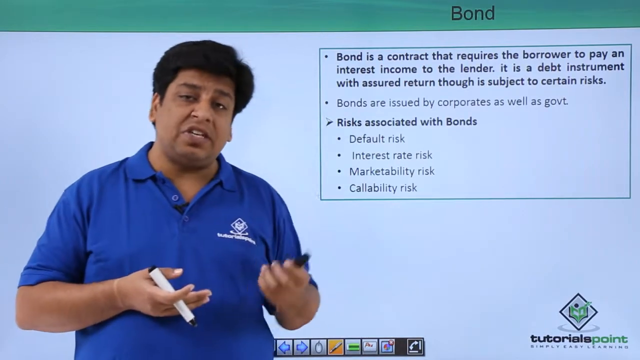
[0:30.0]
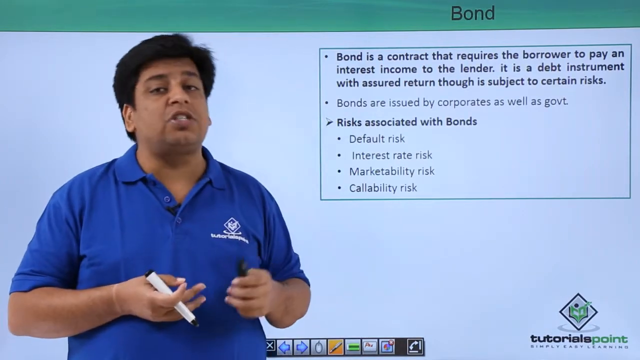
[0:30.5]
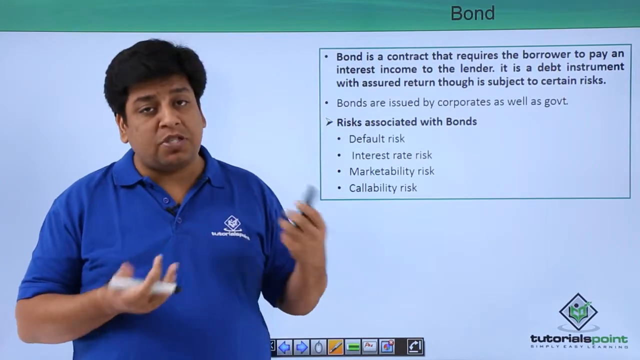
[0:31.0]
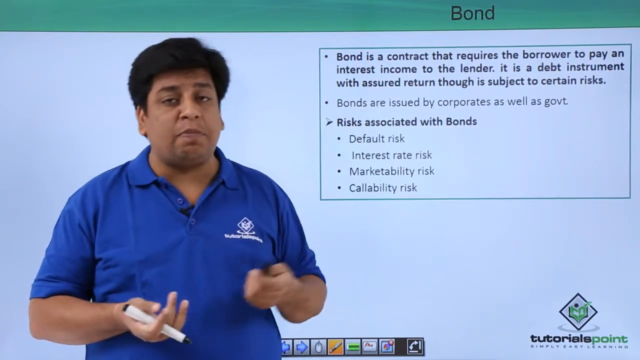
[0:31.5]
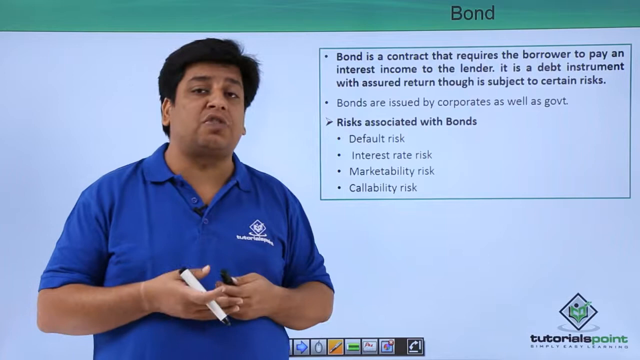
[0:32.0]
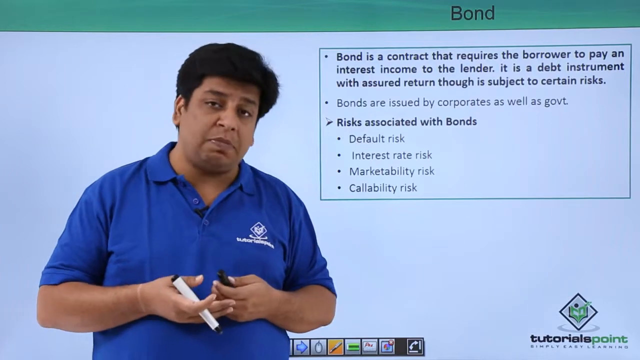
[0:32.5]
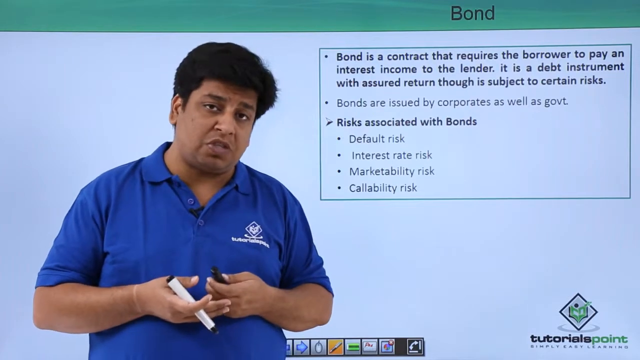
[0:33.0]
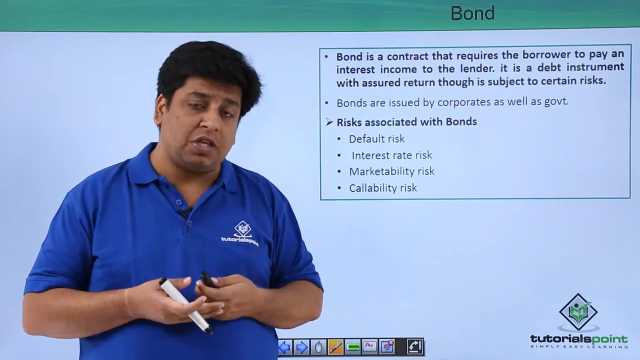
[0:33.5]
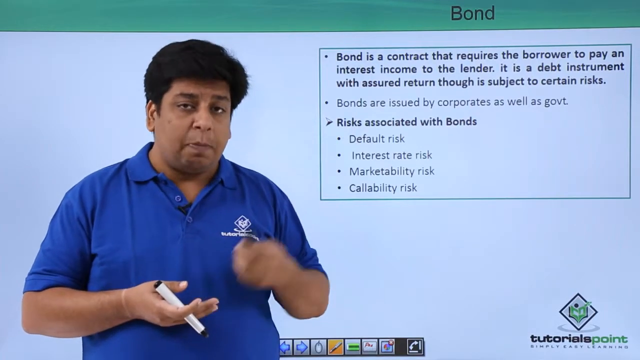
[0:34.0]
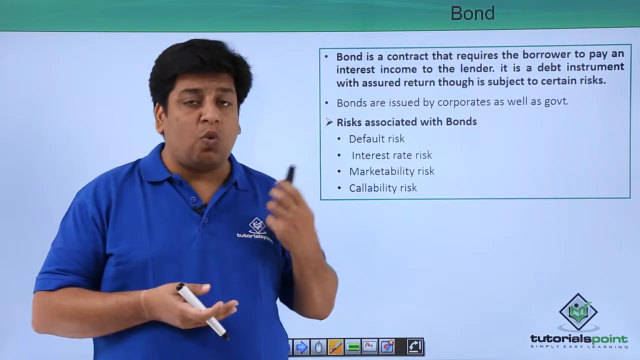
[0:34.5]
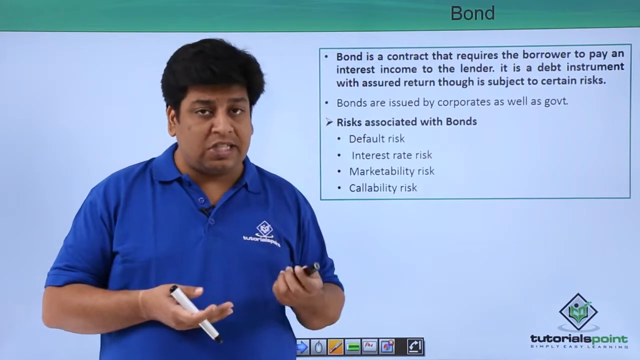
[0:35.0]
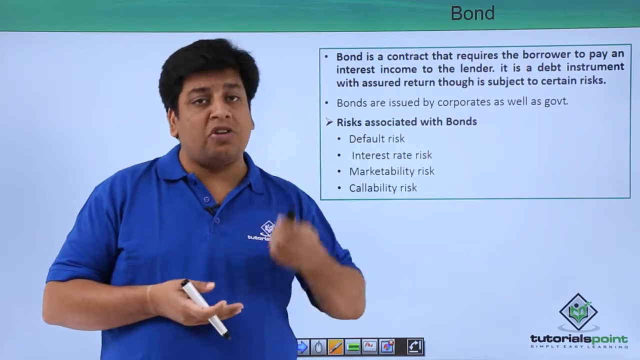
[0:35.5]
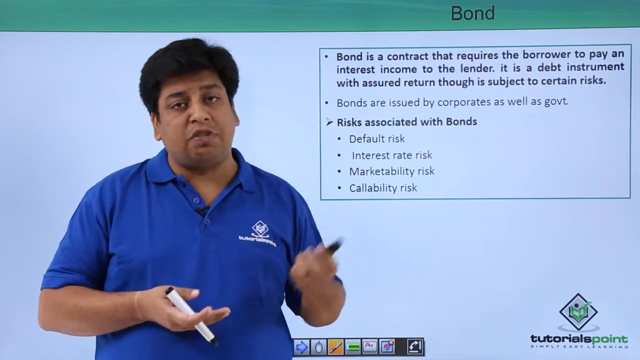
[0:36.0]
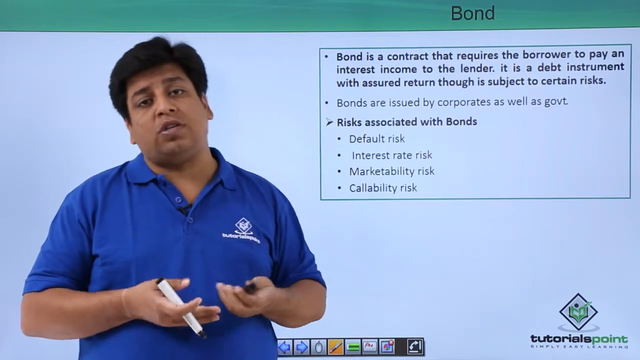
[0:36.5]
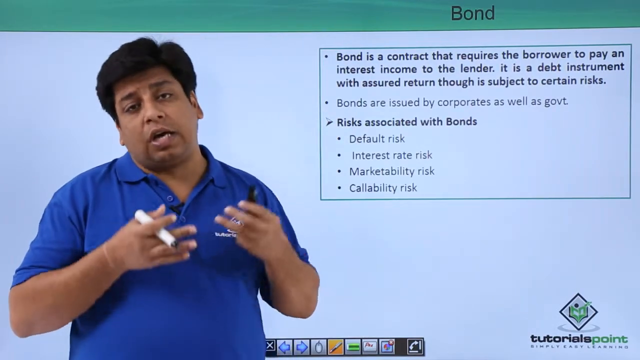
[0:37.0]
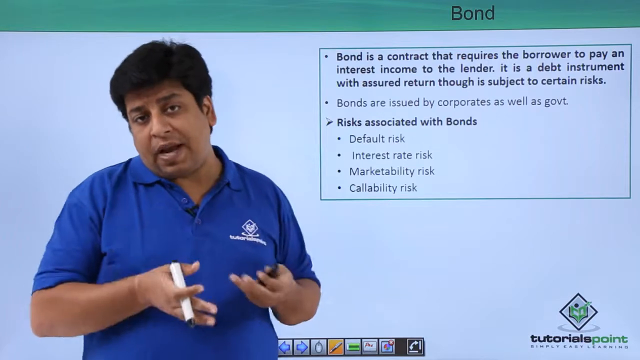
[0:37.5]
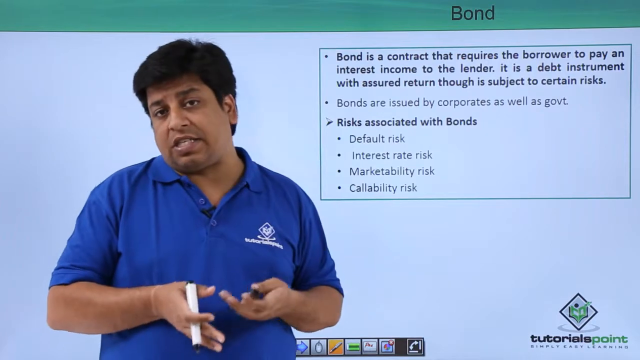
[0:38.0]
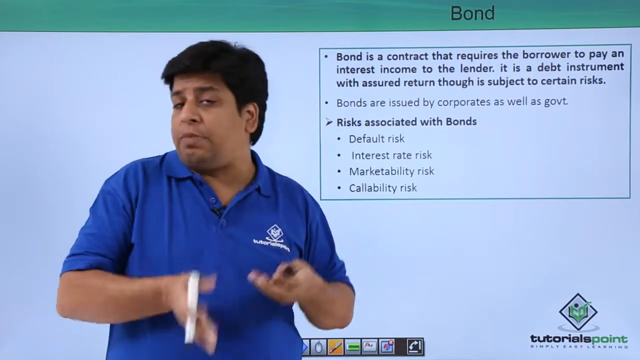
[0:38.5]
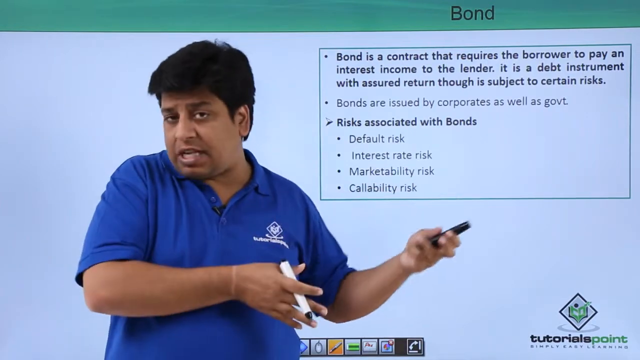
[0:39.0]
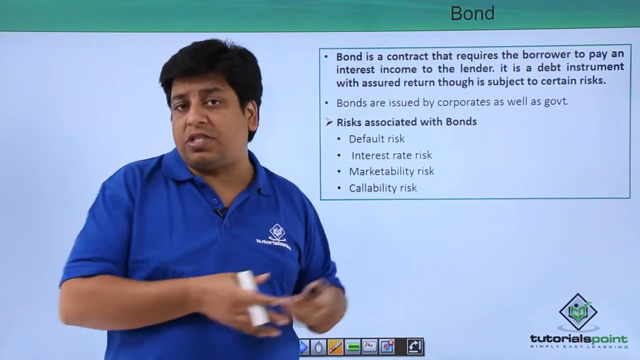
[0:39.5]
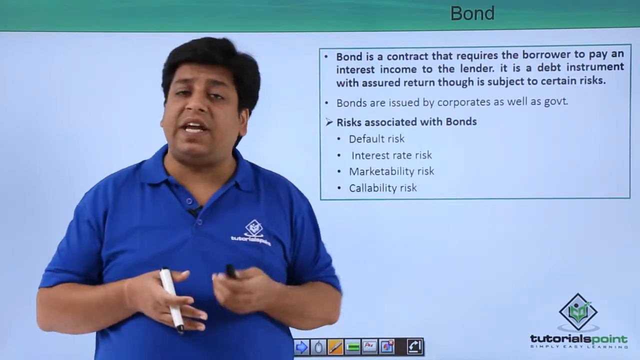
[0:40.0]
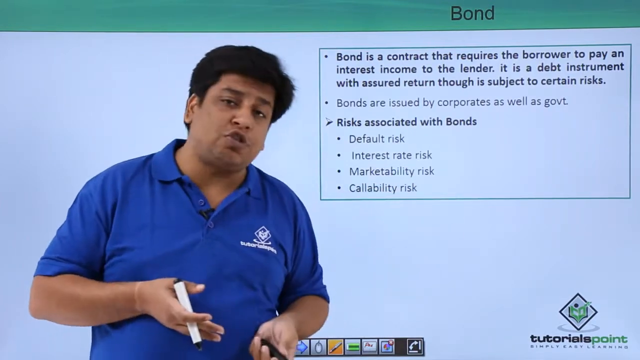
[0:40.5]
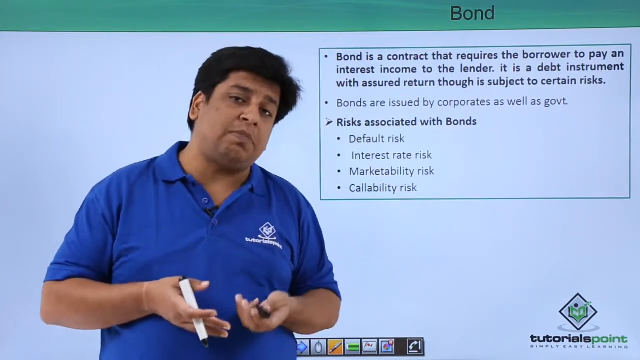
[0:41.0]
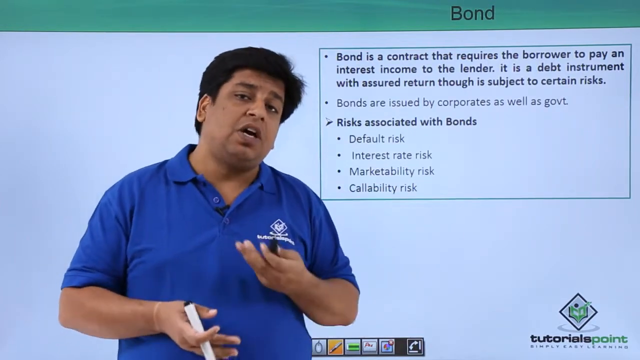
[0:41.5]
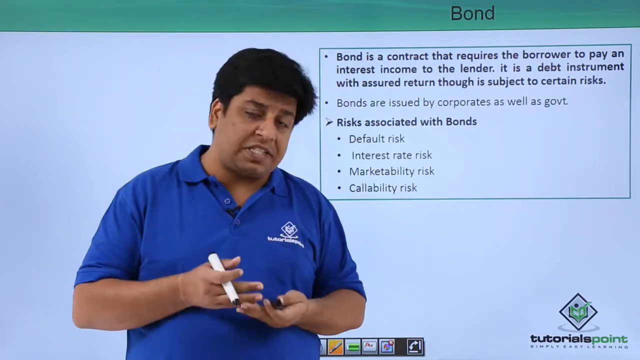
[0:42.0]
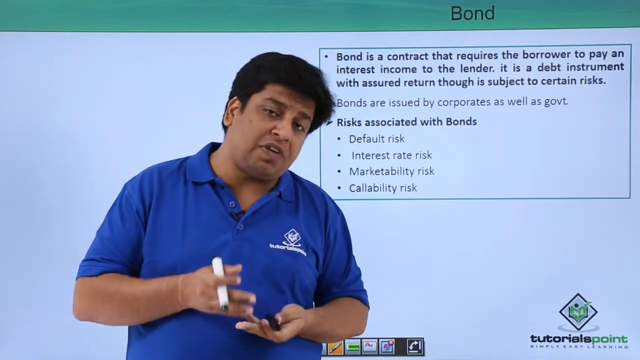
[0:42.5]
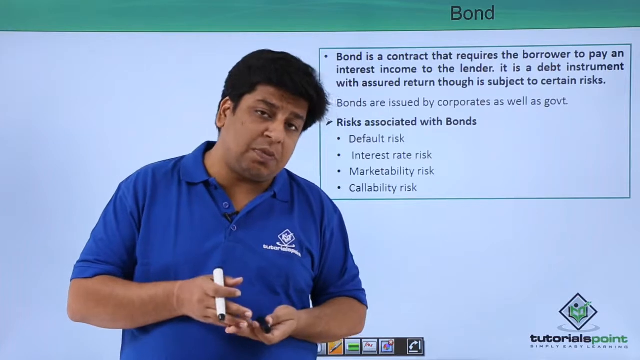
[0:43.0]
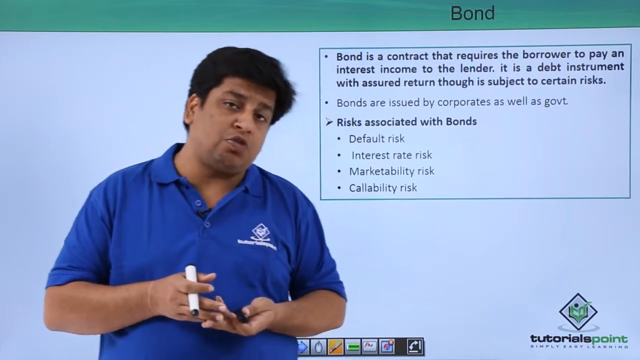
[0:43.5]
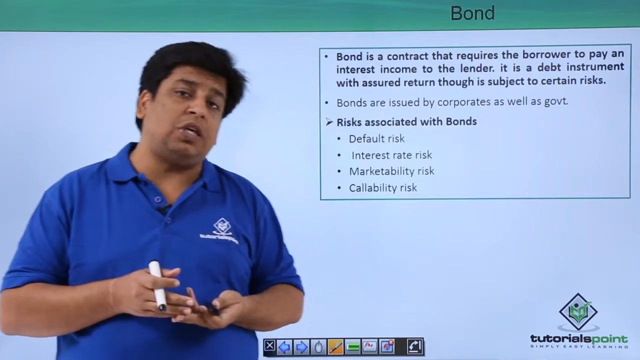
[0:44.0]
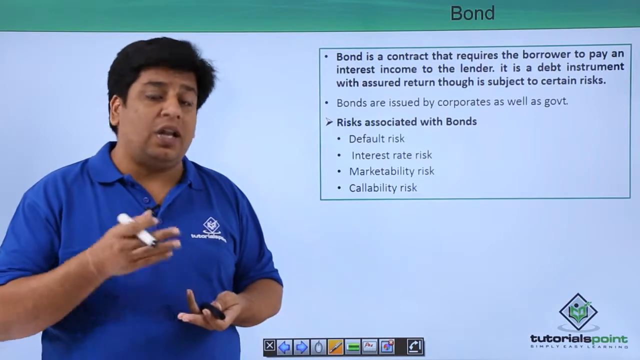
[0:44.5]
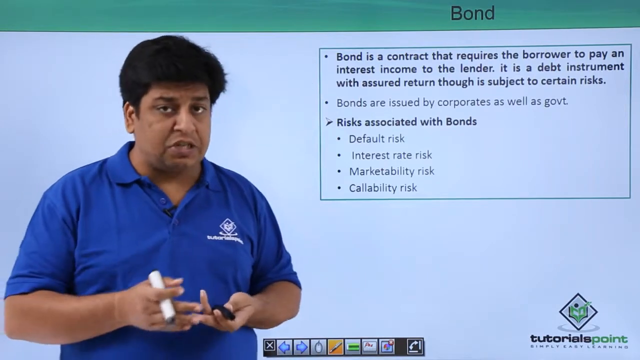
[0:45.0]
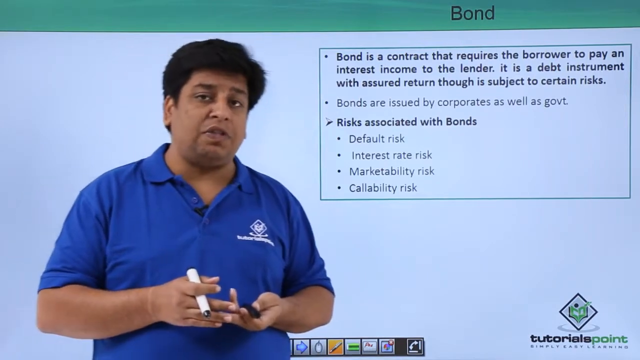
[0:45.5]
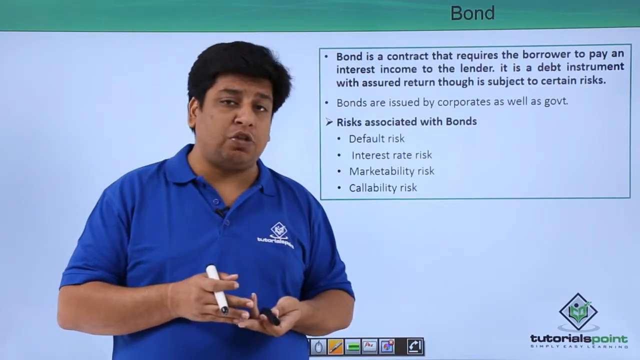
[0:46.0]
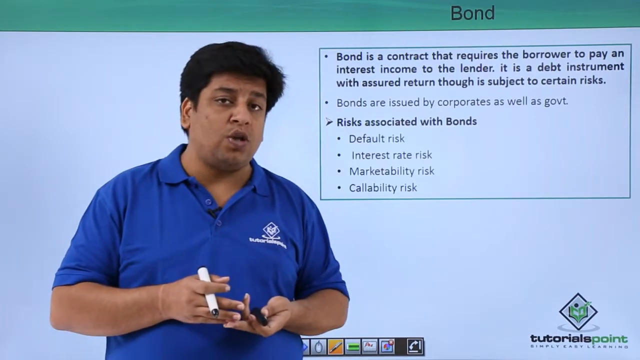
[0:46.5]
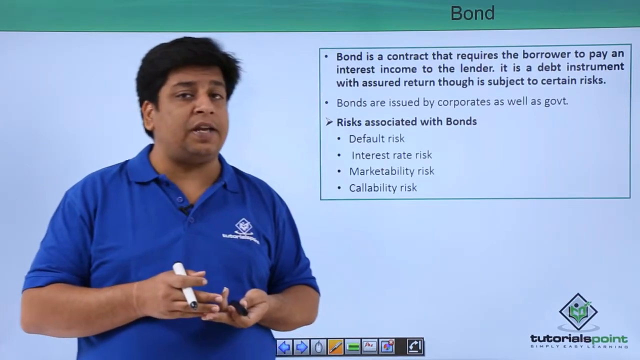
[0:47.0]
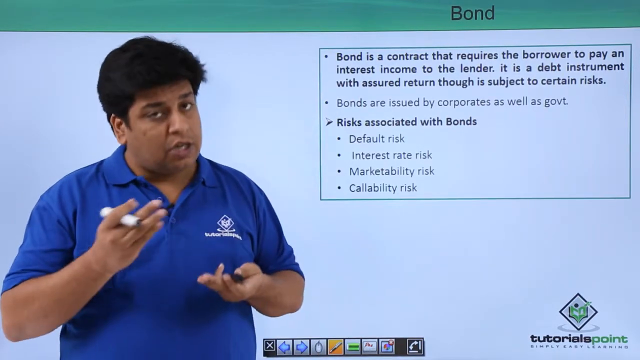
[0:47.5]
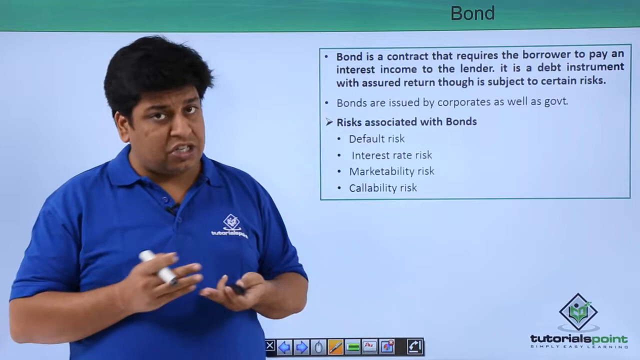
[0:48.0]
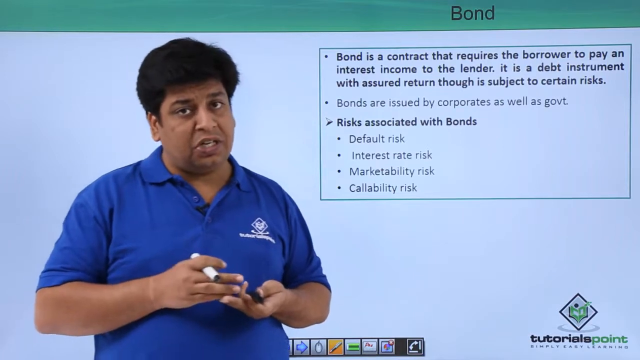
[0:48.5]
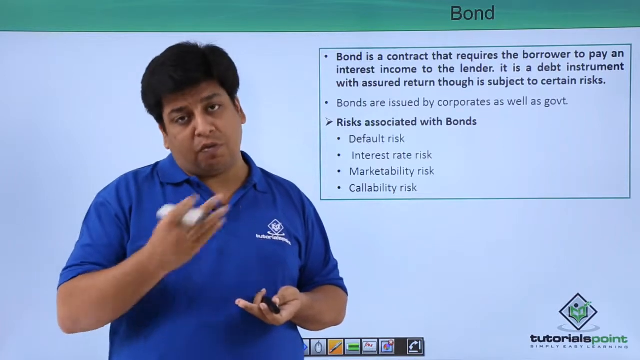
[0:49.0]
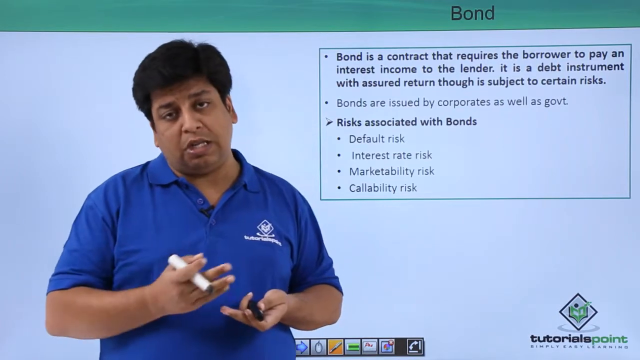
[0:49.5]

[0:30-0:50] The Indian man in a blue polo shirt with a company logo on the left breast looks at a definition of bonds off to his left, then talks to the camera, looking straight ahead. He holds the marker in his right hand and the marker cap in his left hand. He has long, puffy black hair. The definition in the top right of the screen reads "bond is a contract that requires the borrower to pay an interest income to the lender. It is a debt instrument with assured return, though is subject to certain risks."